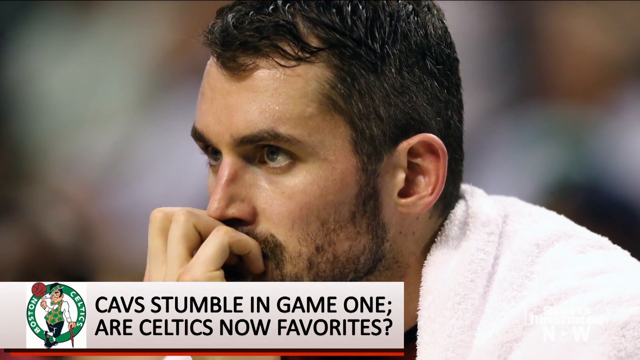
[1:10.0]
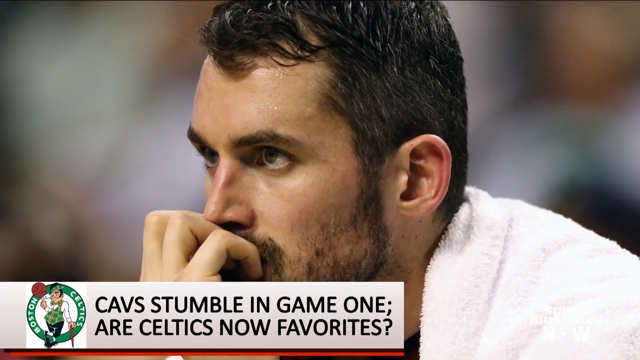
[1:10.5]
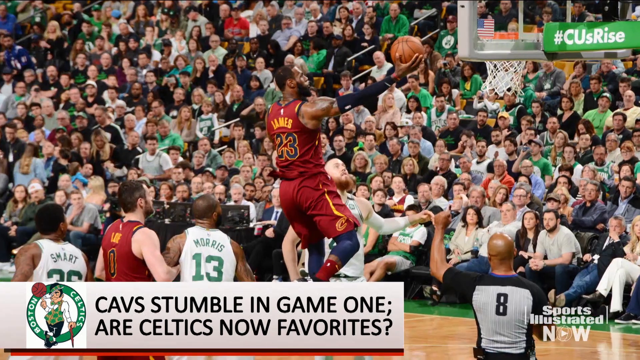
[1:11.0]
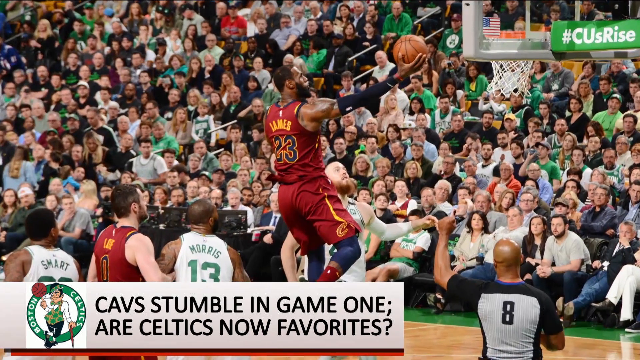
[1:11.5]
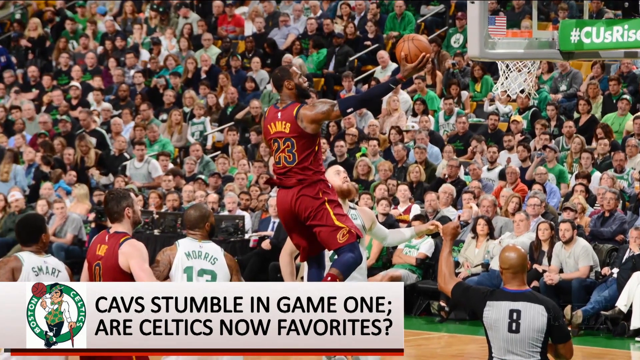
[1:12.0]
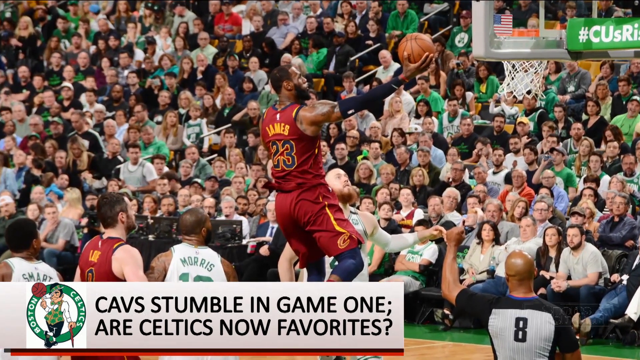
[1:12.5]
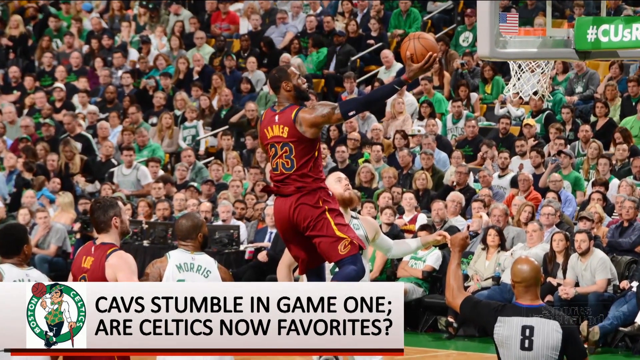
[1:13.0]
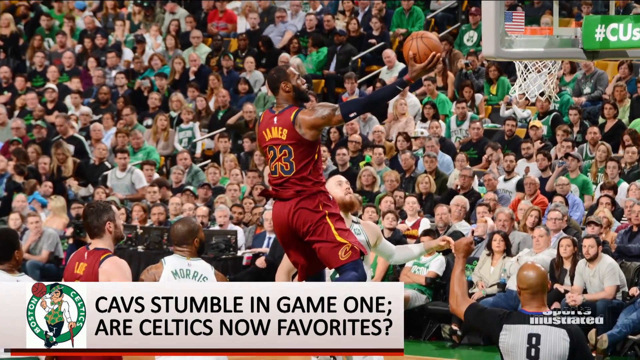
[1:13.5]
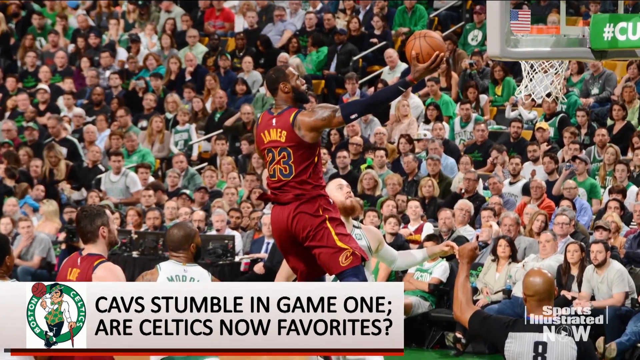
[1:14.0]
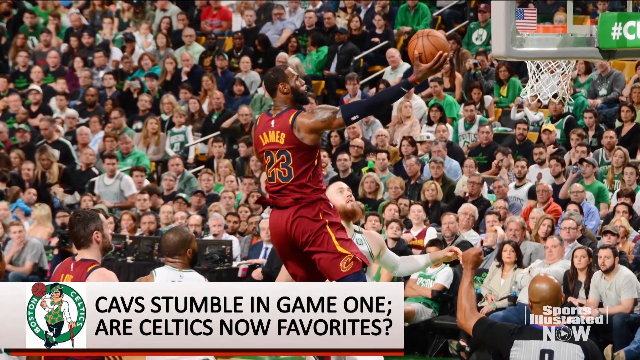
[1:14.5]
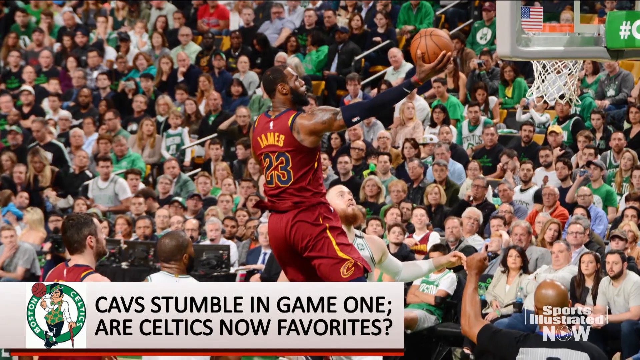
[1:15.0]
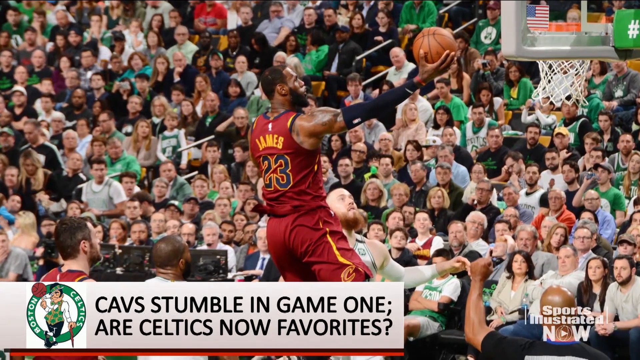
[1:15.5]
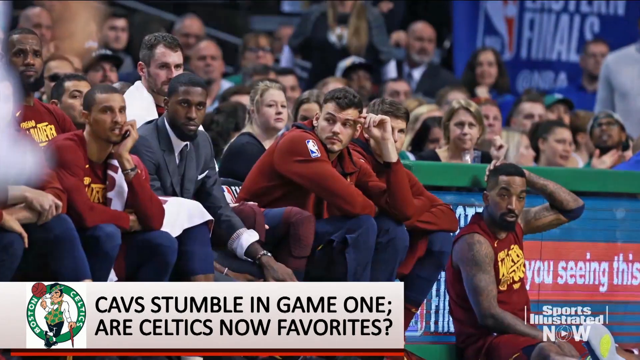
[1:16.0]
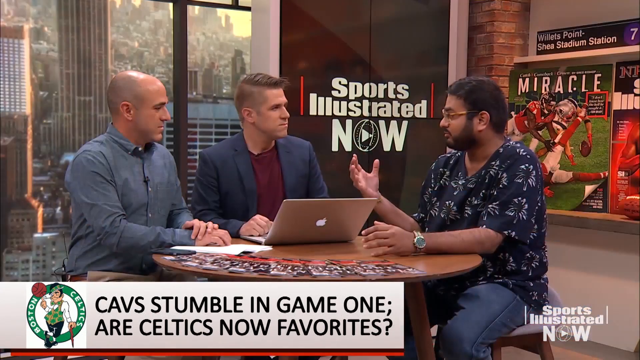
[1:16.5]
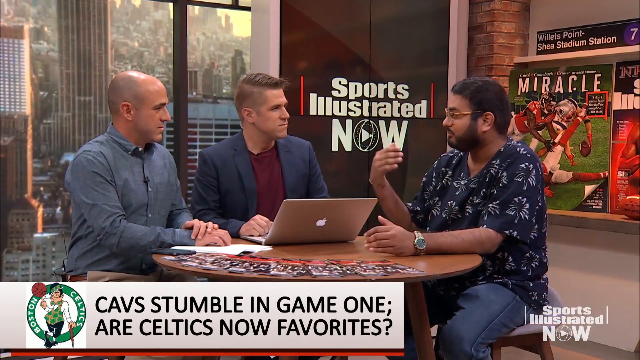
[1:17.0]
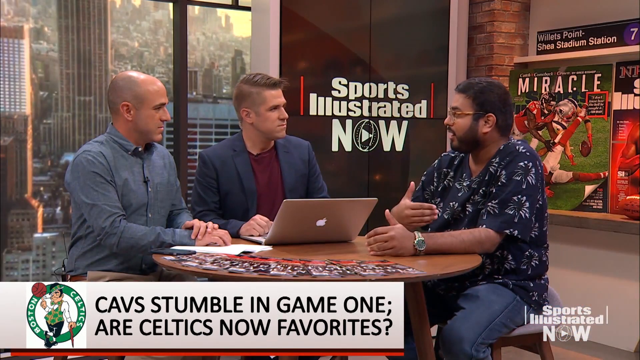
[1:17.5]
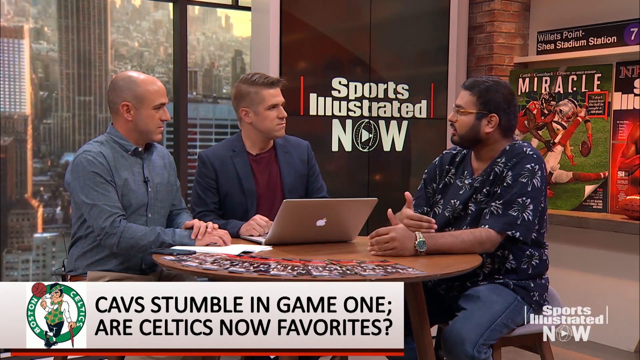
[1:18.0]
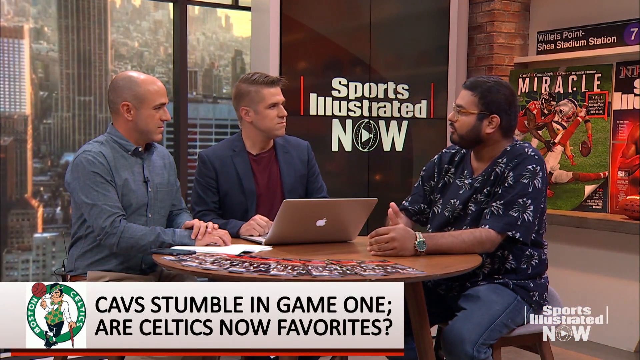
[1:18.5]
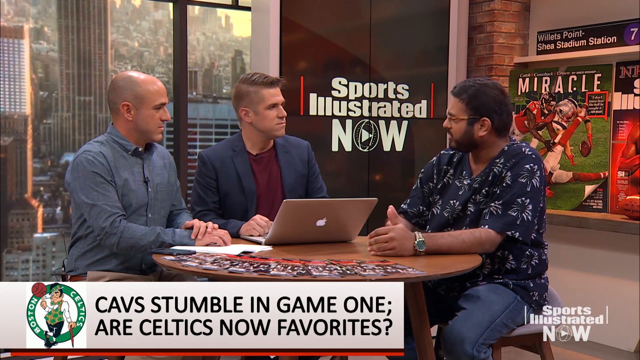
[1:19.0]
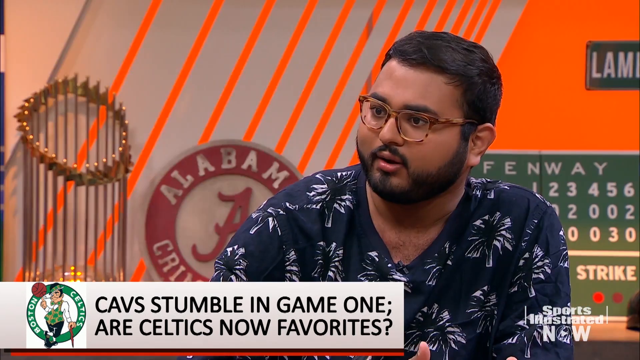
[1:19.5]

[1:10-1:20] A slide shows a Cavaliers player in the air by himself with the ball in his hand, preparing to make a layup. One player is kind of on the ground looking up at him, in no position to defend the shot. A referee below is also looking up at the player in flight with his hand up, possibly signaling a foul. The game is in a packed stadium with the seats completely full of people. Text says the Cavaliers stumbled in Game 1 and the Celtics now look to be the favorite. The video then shows a man at a round table sitting with two other men; he appears to be talking about the slide and making a point, gesturing with his hand.